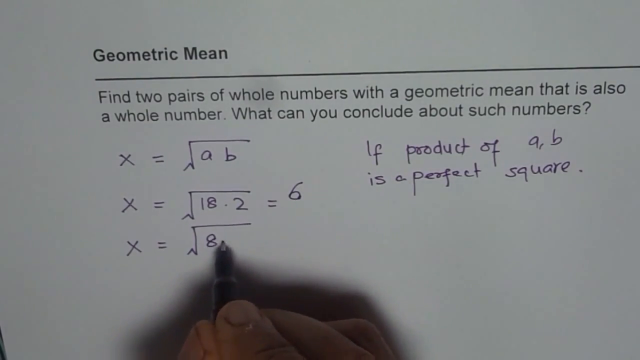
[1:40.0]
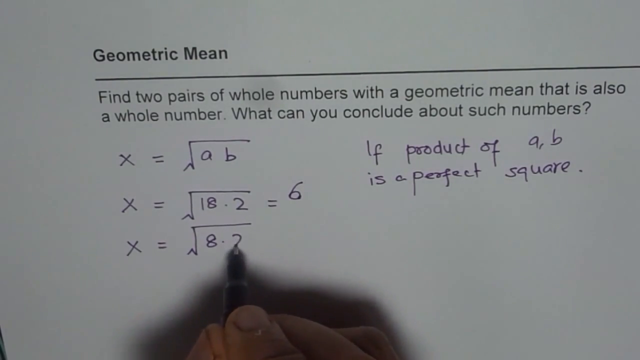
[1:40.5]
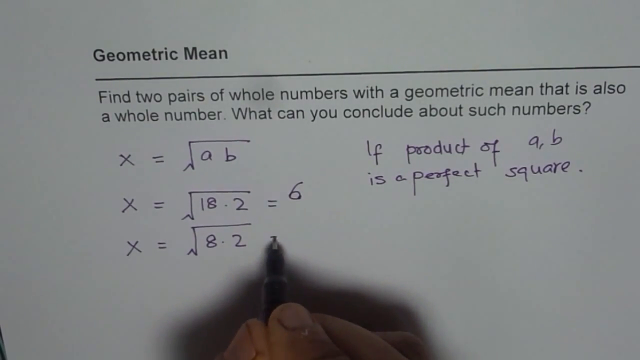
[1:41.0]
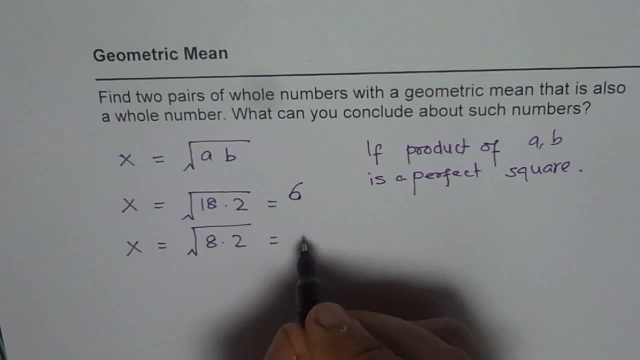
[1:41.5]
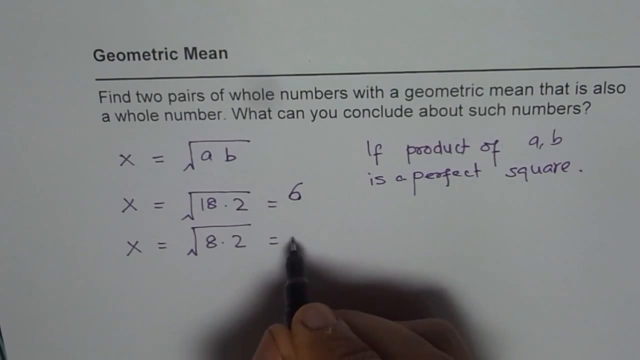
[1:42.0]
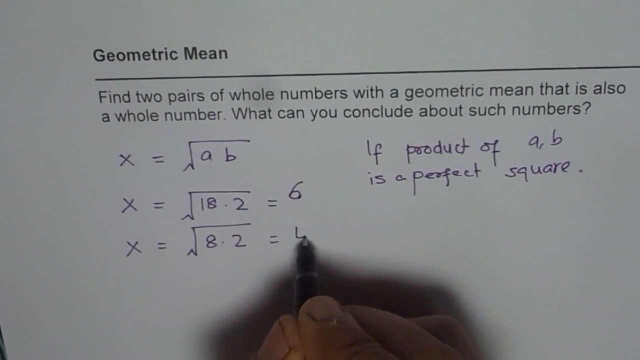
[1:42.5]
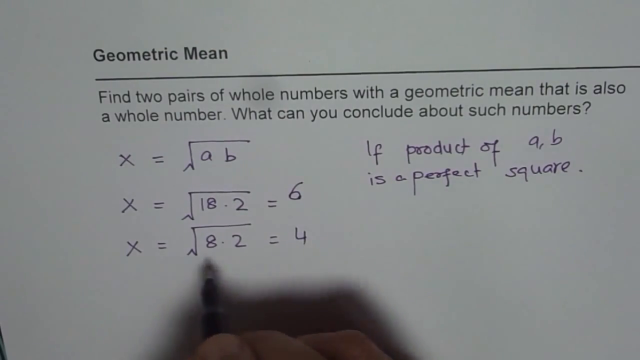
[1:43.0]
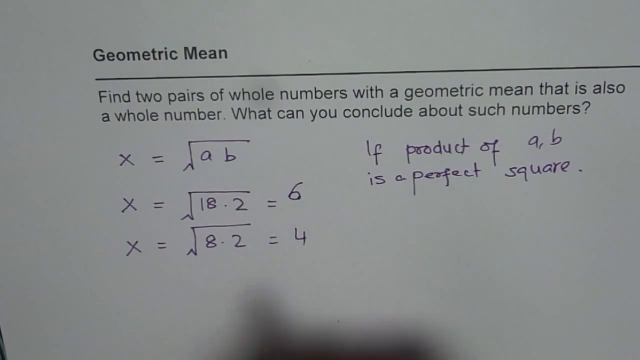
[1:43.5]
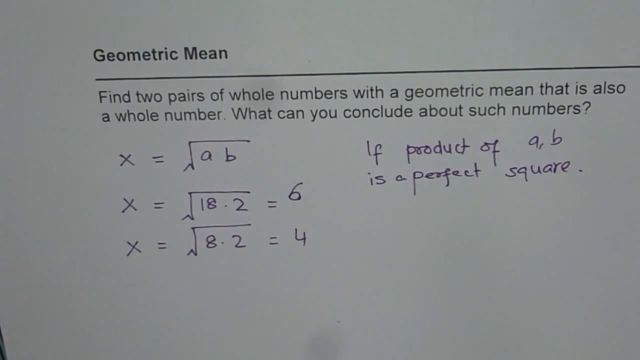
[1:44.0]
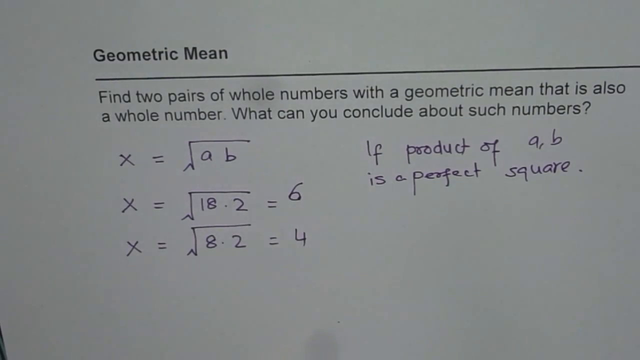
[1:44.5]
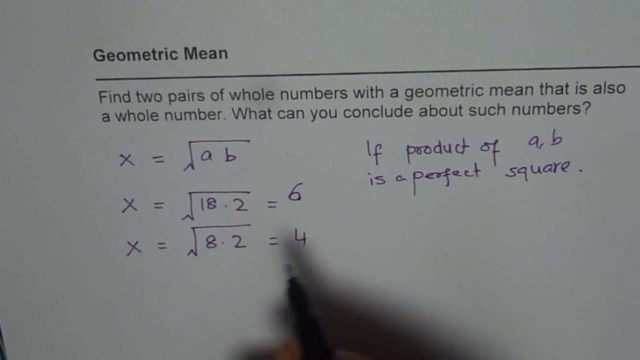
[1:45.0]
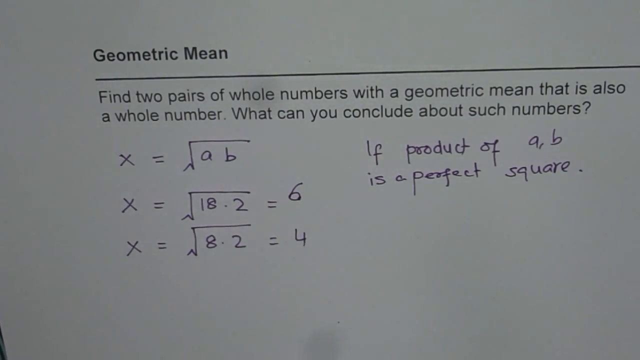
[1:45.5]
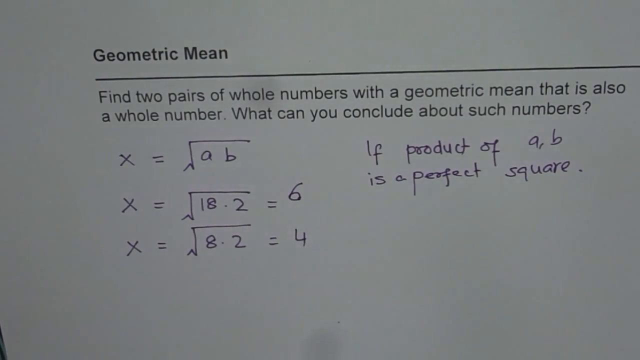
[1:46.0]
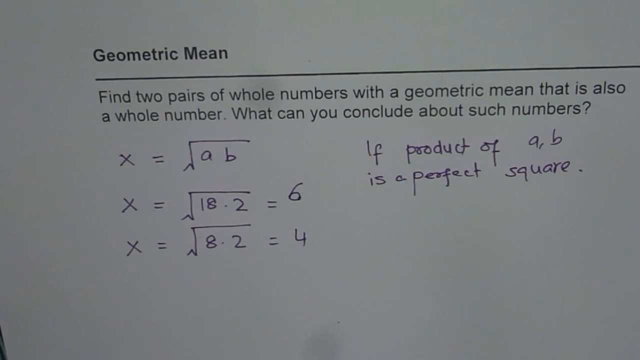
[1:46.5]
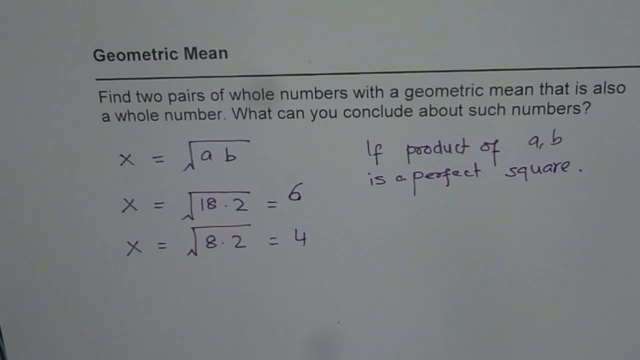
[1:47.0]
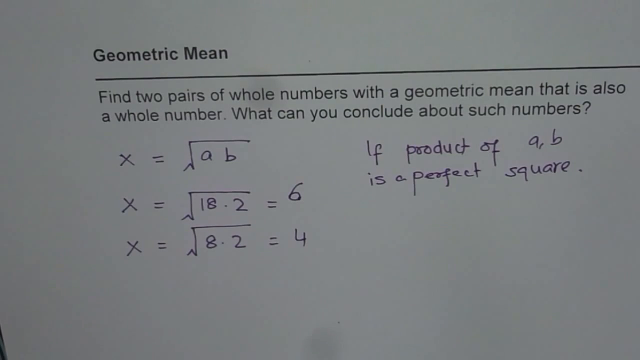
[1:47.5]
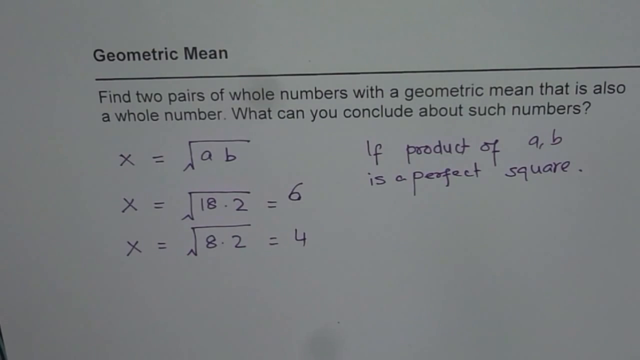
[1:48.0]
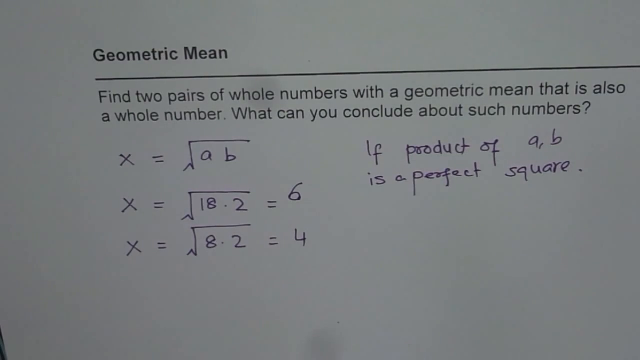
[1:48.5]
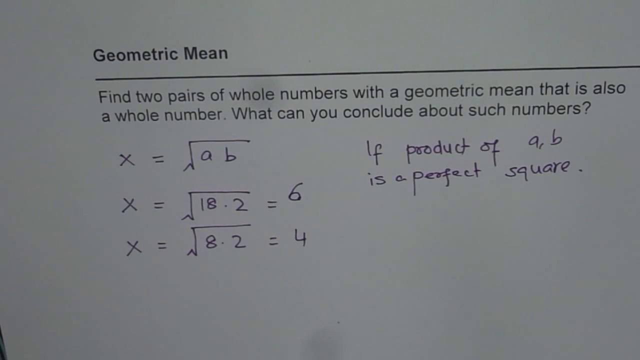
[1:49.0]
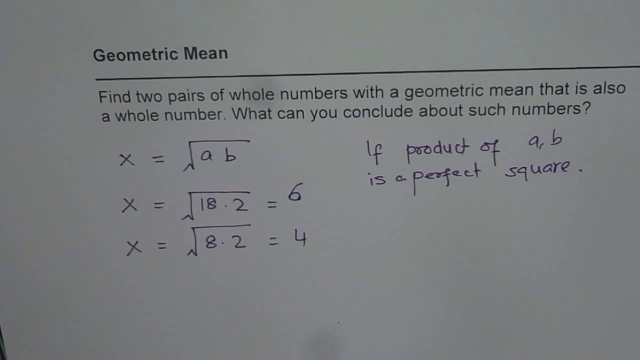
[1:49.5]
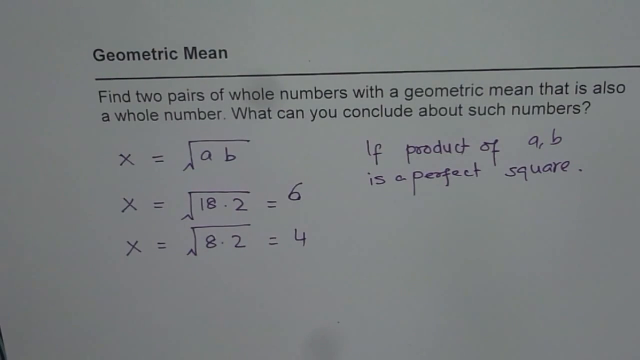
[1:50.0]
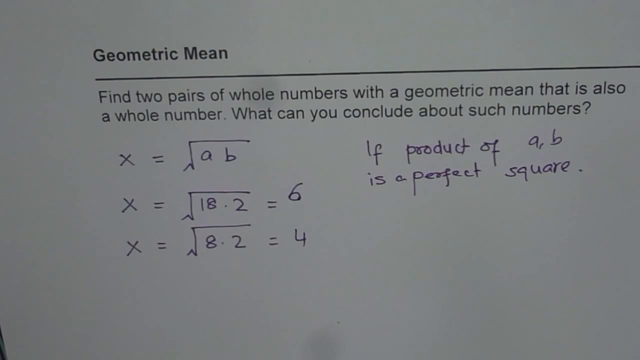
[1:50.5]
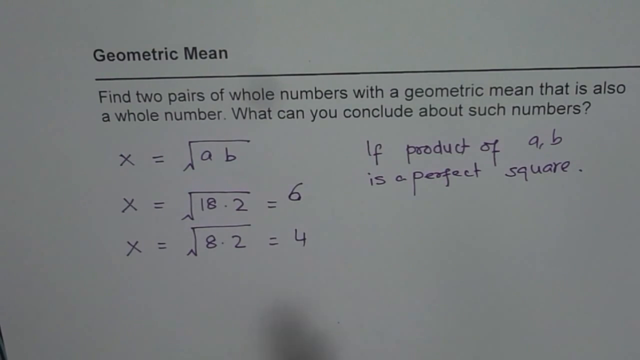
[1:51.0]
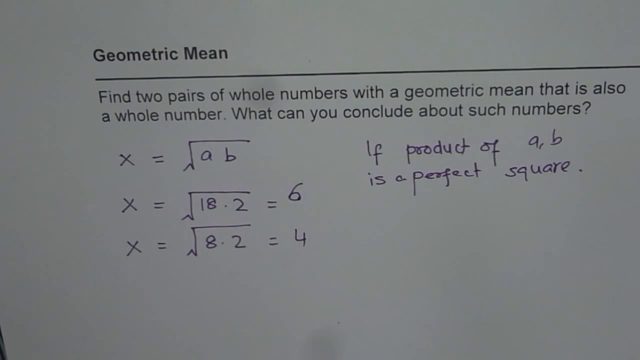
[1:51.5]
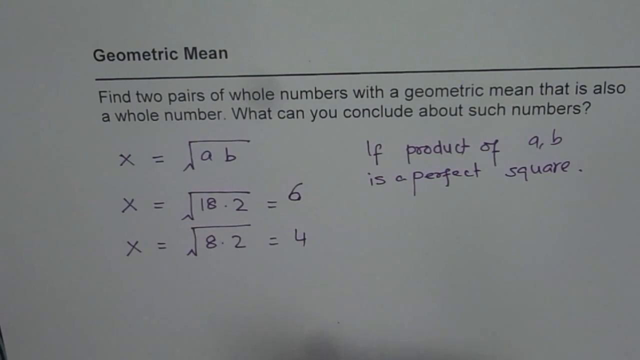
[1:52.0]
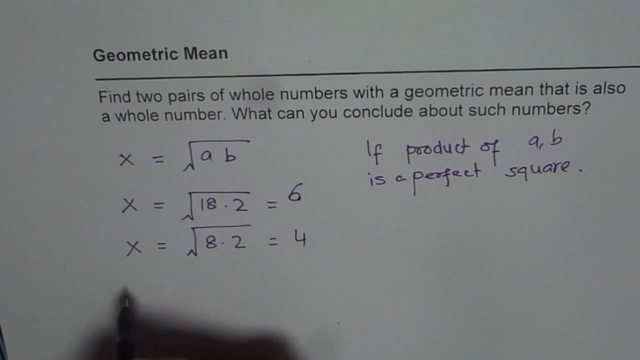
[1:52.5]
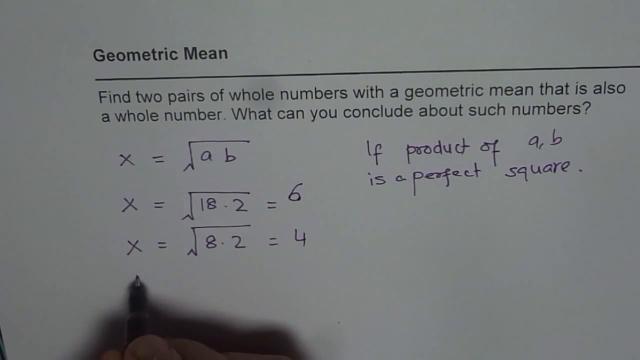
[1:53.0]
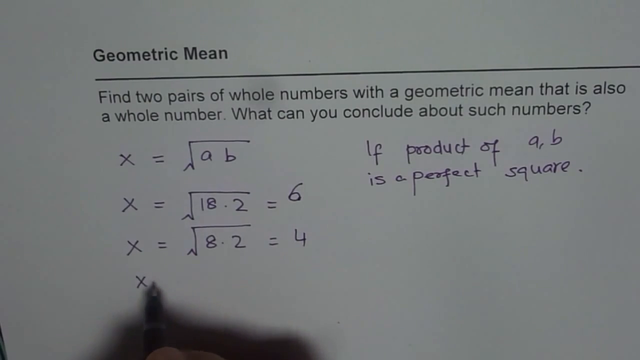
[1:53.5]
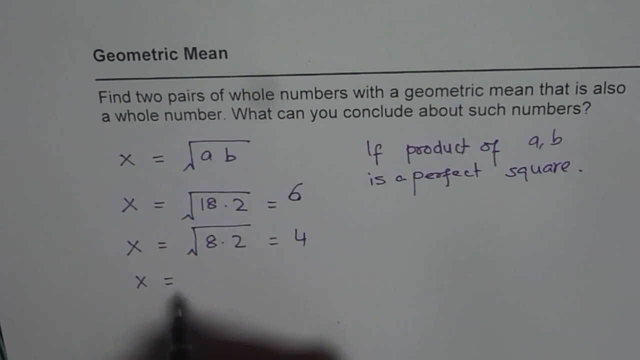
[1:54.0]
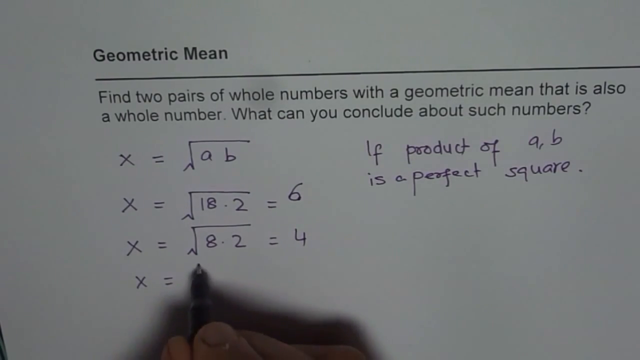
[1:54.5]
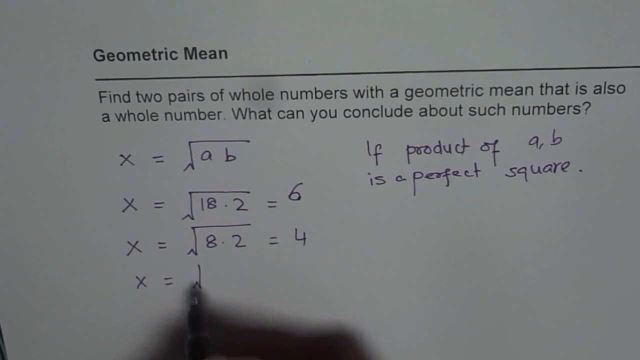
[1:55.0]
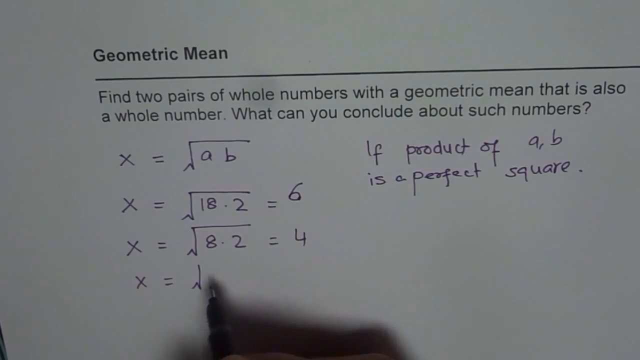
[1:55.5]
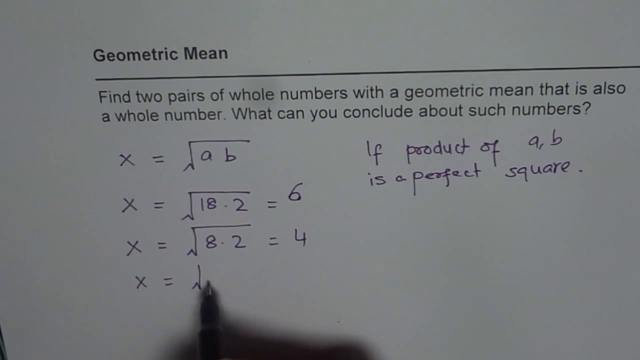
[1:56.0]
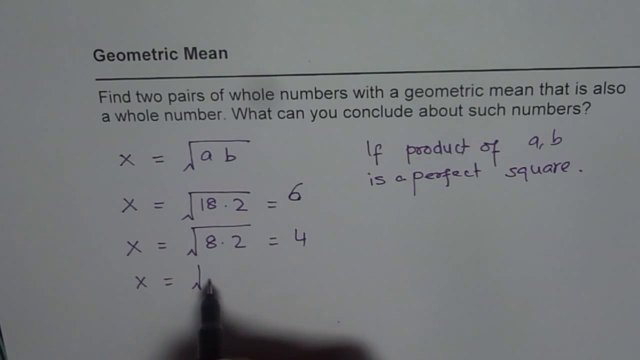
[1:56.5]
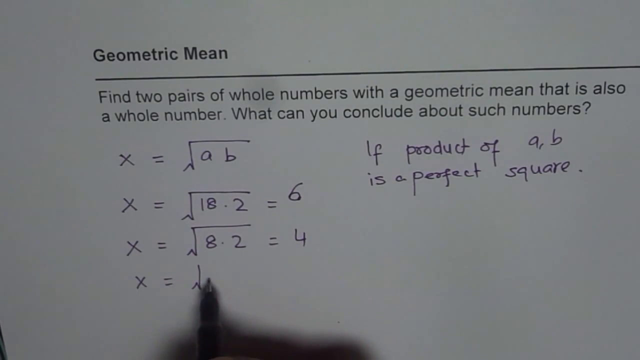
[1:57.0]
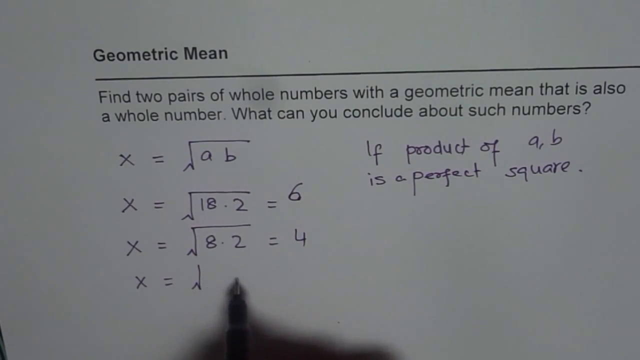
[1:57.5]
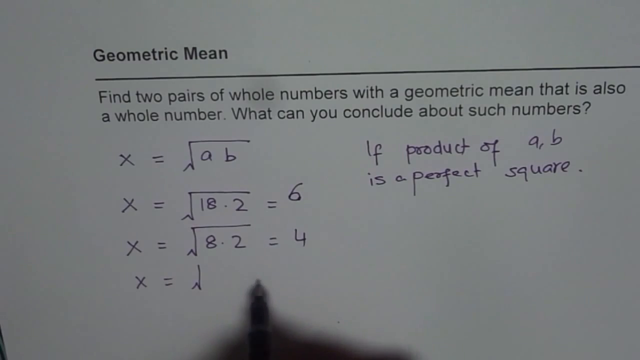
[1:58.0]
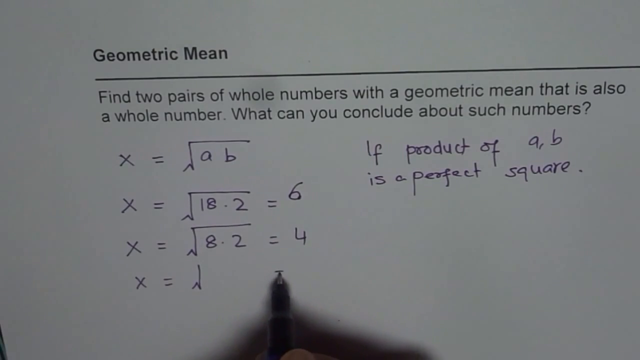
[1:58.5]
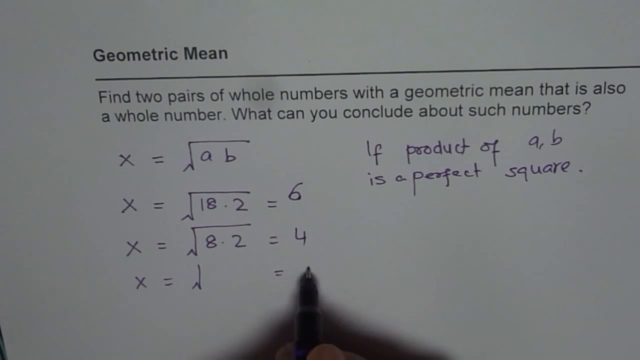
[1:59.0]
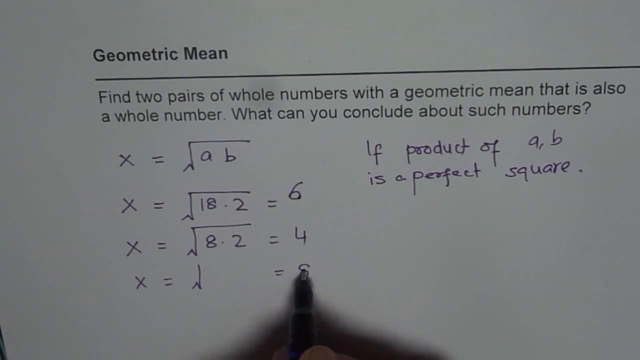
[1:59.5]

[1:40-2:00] The right hand with the pen writes .2 after the 8, then writes equals 4, and moves the pen back and forth under the 8, the 2, the equal sign and the 4. The pen leaves the screen for a moment and comes back in, repeatedly moving out of the screen and back to the 4. The pen then leaves the screen for quite a few seconds and comes back from the bottom of the screen in a flurry of back-and-forth action below the 4. It moves along the bottom of the screen before coming back in on the left-hand side, where he writes a fourth X below the third X and an equal sign, hesitates, and writes another equal sign under the equal signs on the right-hand side. He then writes the number 8 after the last equal sign.